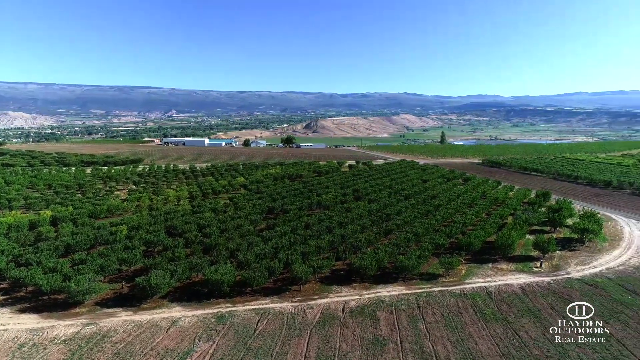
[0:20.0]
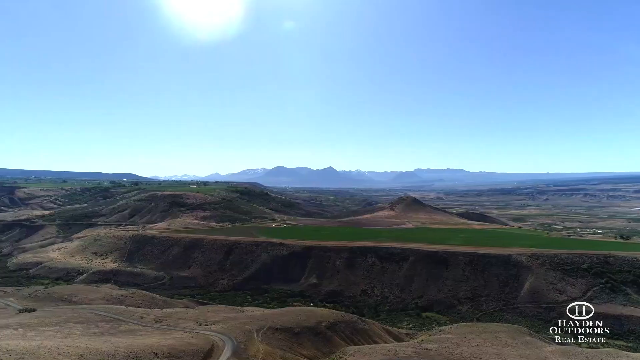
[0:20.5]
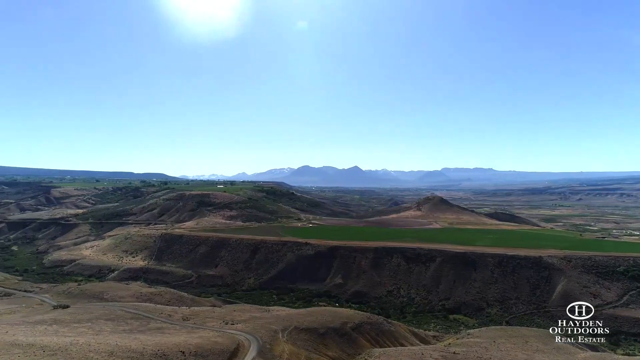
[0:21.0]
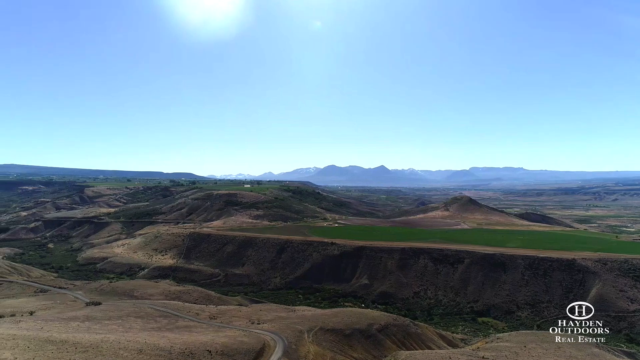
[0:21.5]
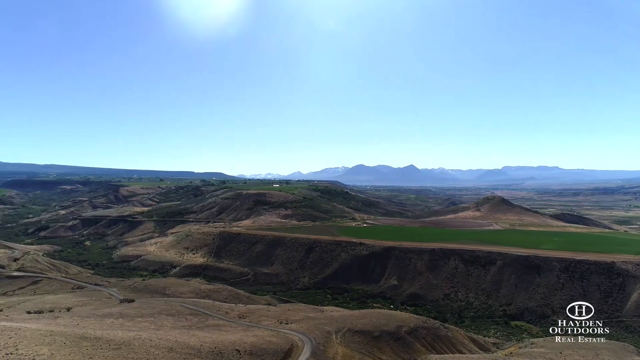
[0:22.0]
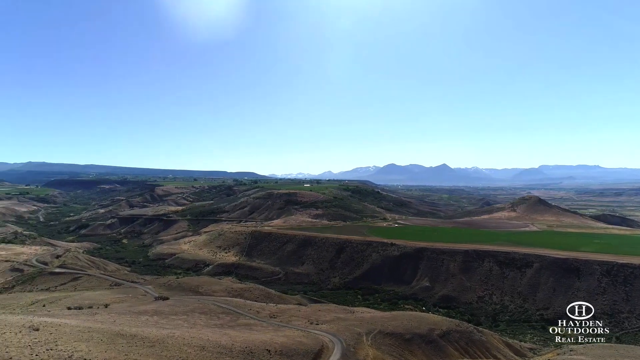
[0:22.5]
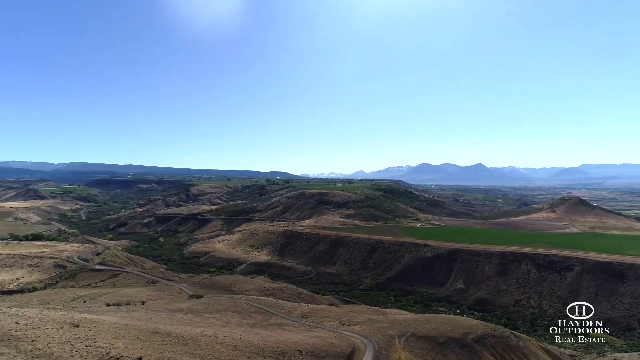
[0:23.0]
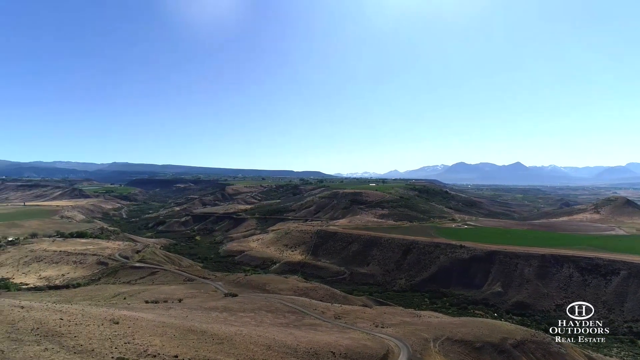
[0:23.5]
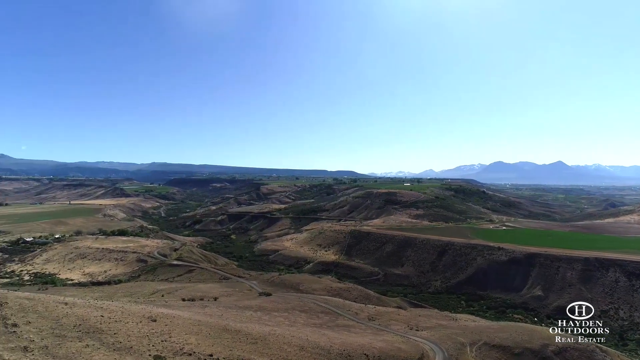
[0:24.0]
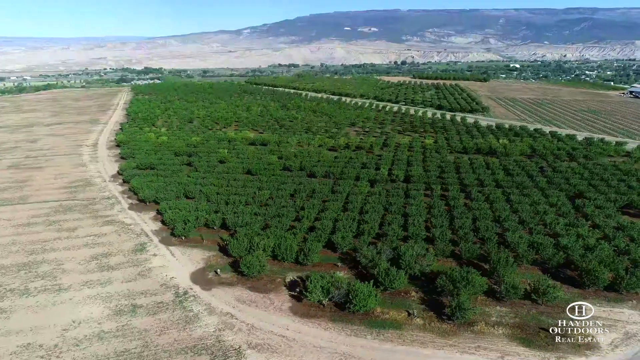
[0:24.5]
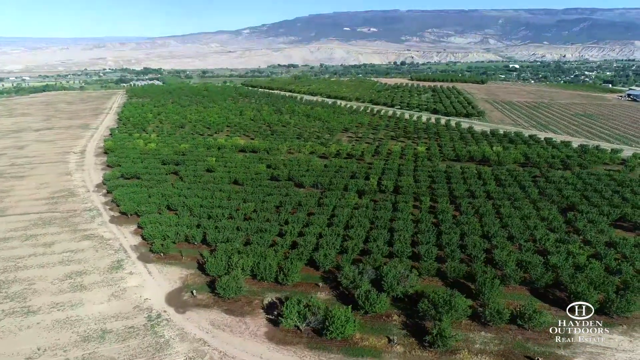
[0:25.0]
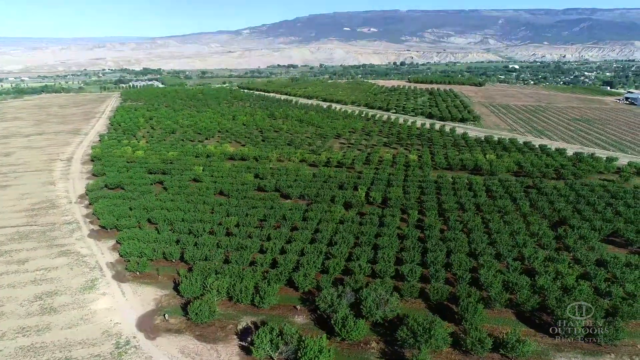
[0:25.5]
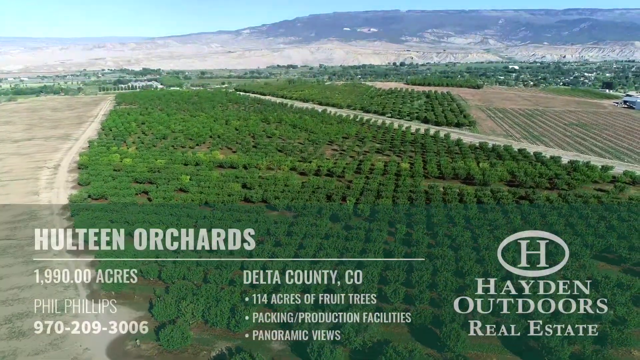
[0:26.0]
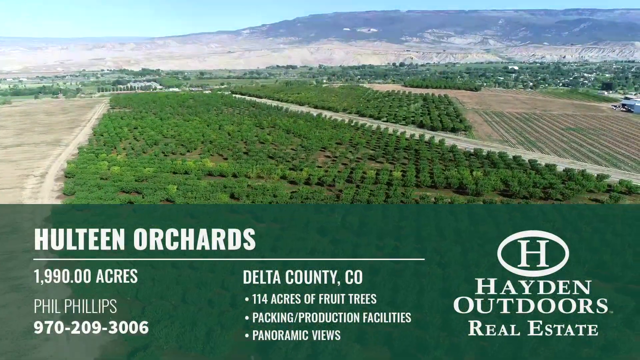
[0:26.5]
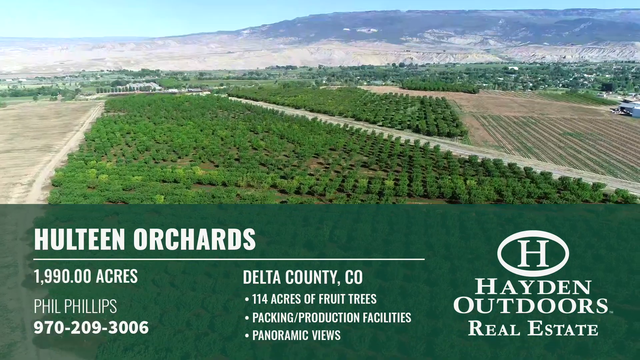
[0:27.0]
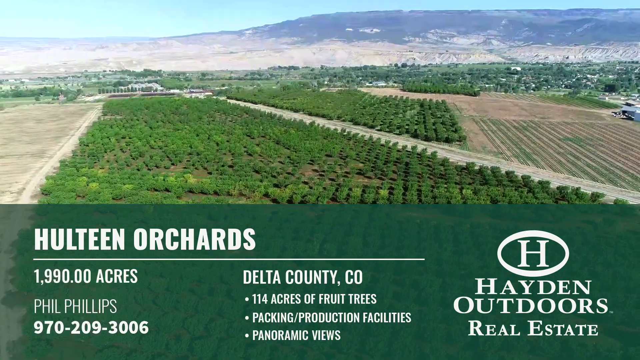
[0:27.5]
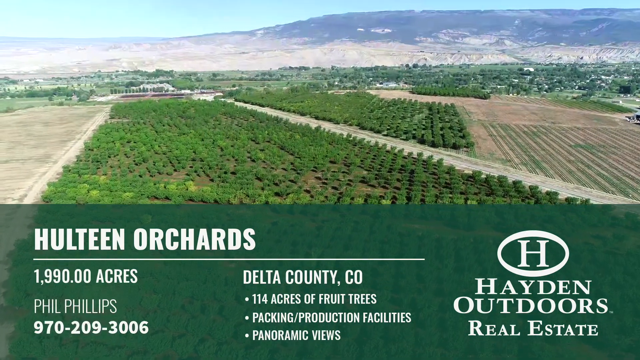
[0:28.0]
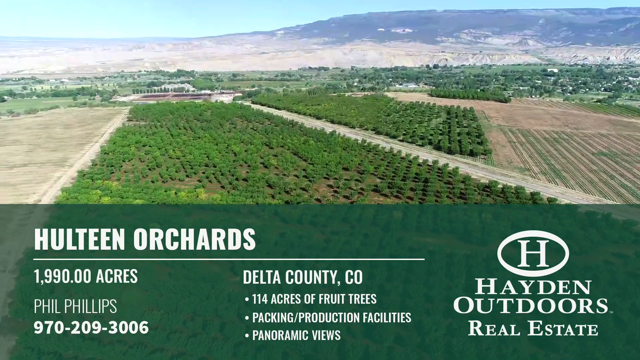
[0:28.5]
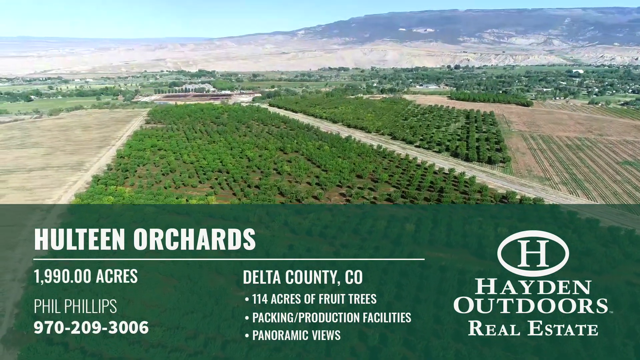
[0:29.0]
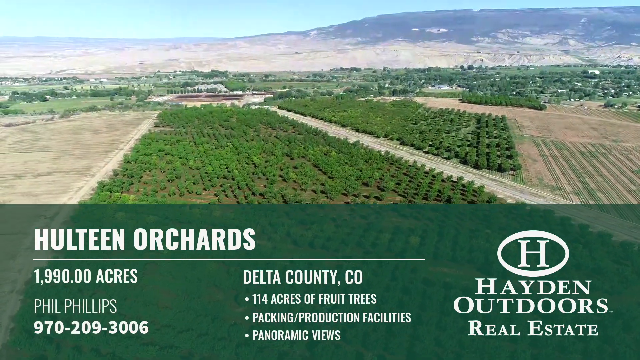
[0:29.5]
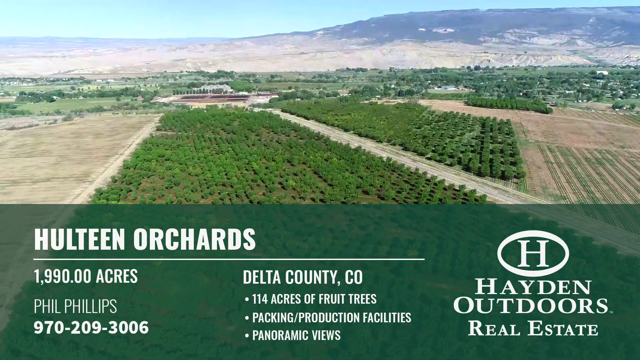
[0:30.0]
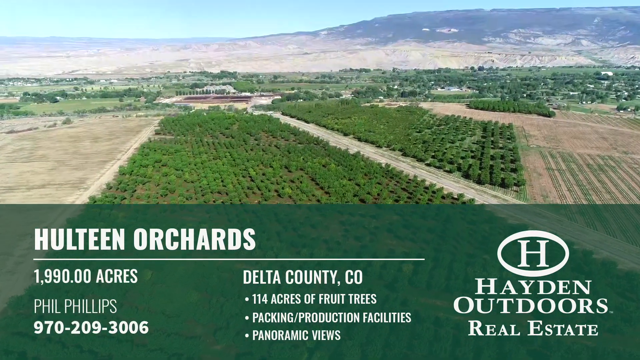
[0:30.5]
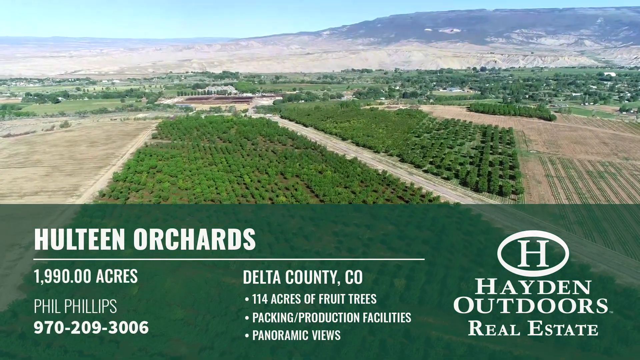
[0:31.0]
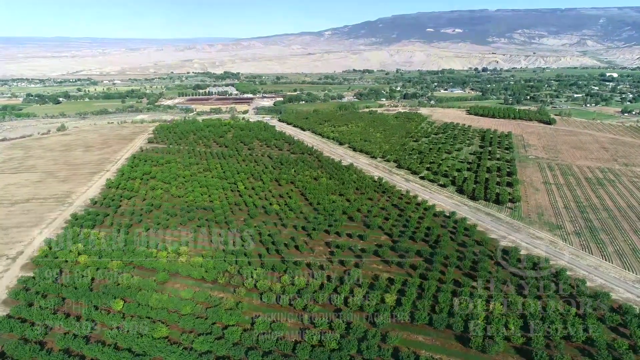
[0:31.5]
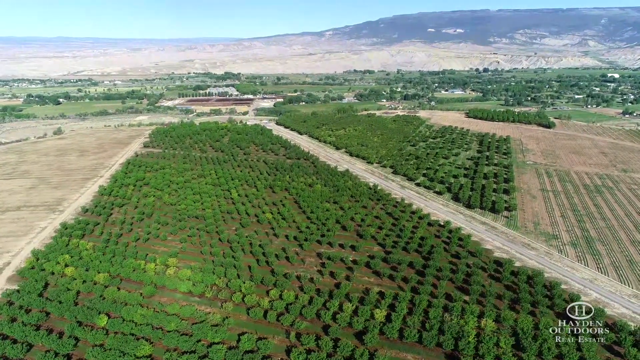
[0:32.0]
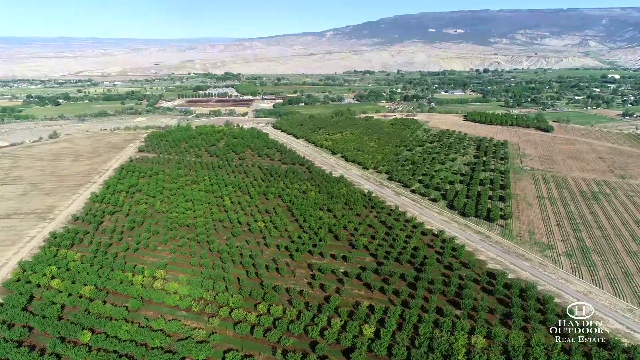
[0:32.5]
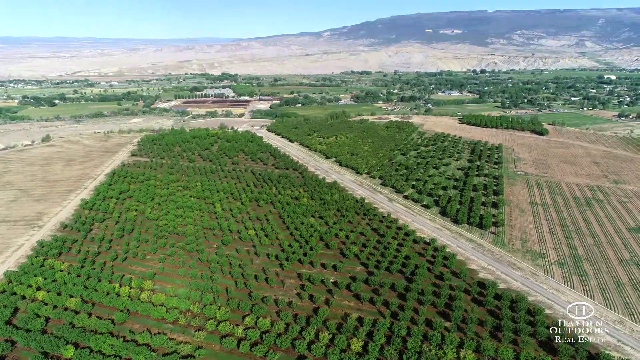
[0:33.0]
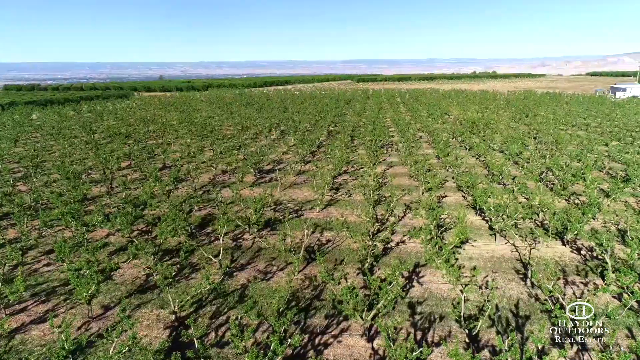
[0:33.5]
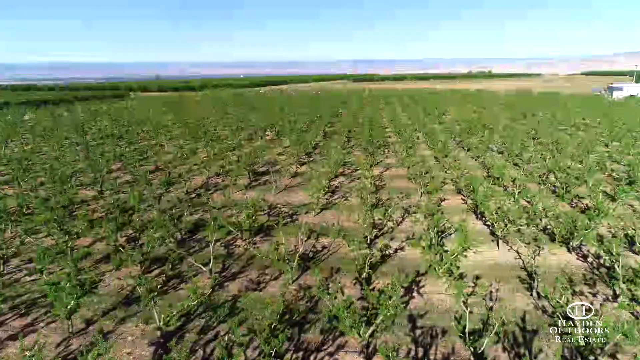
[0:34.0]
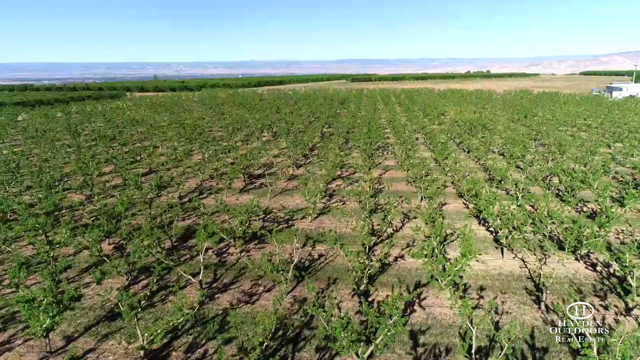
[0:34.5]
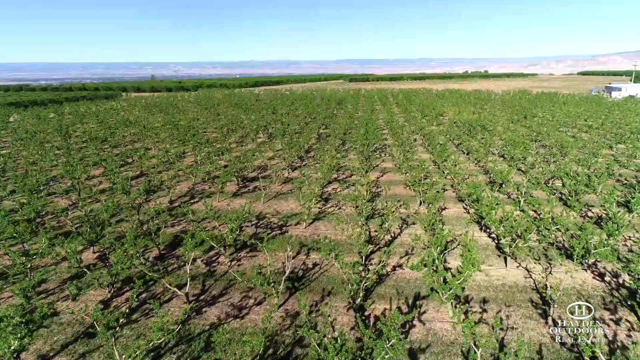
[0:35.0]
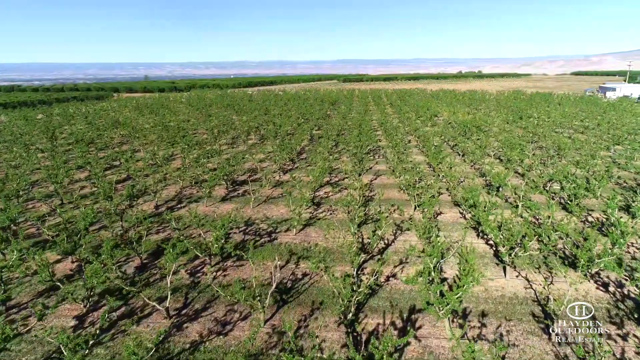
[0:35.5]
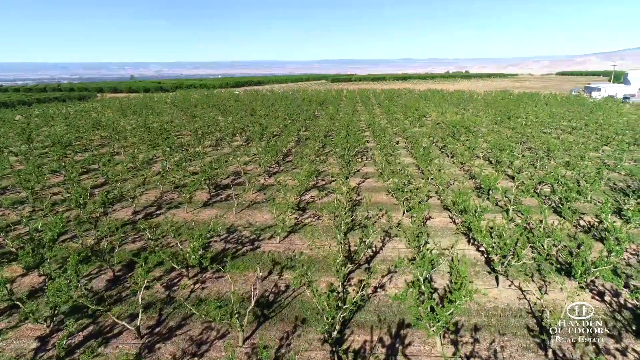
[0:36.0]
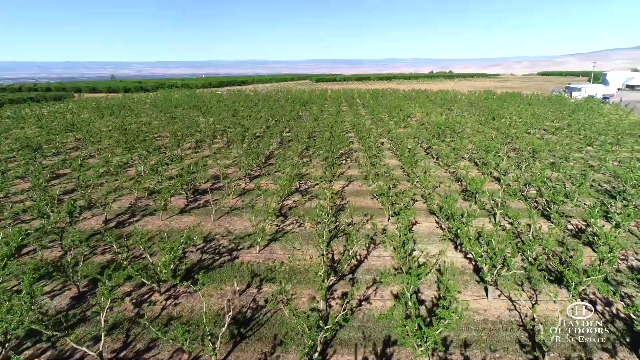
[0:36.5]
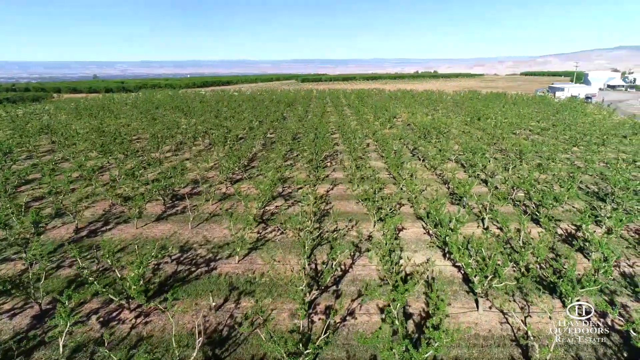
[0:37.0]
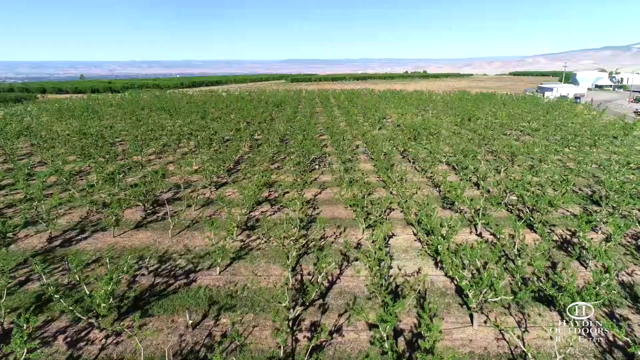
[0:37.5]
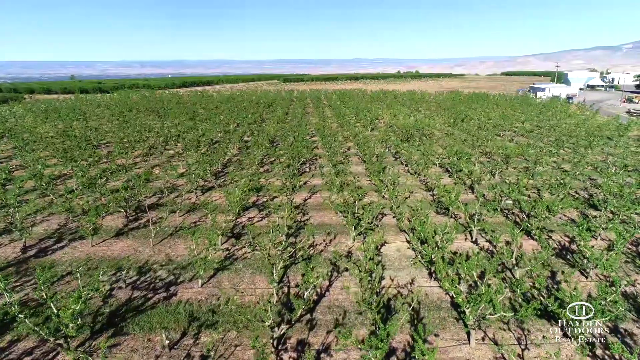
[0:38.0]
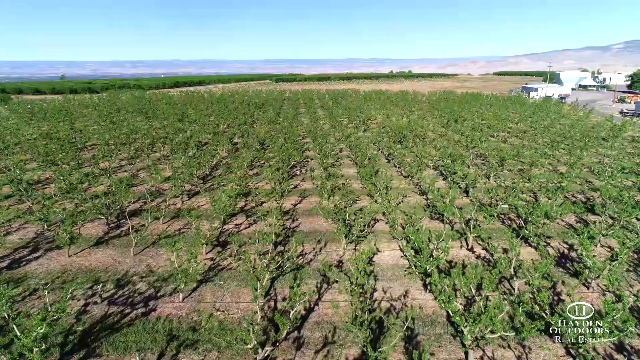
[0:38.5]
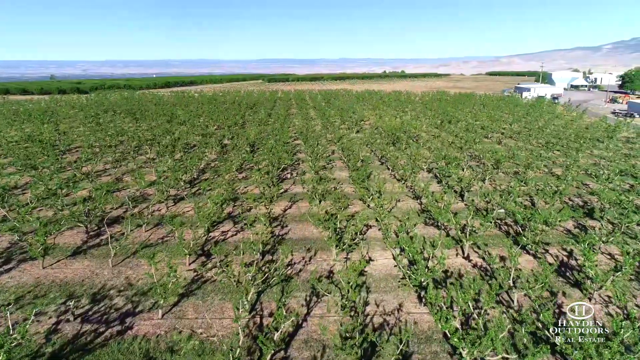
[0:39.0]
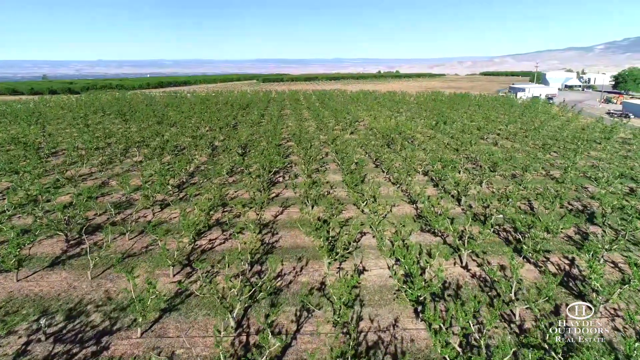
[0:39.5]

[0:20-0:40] Similar aerial shots of the landscape show a lot of quite dry-looking land with a few patches of greenery, distant mountains, and very hot-looking weather with a blue sky and the sun beating down. There seems to be some kind of plantation, and text appears on the screen saying "Hulteen Orchards", giving 1,990 acres in Delta County Colorado, a phone number for Phil Phillips, who apparently works for the real estate company, and some of the amenities of the property. Slow-moving aerial shots of the farmland follow, showing vegetables that look very neatly laid out and green. There seems to be some kind of machinery in the top right corner, maybe lorries or trucks working on the farm.